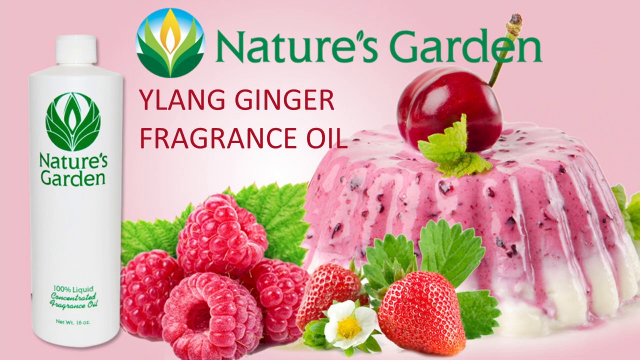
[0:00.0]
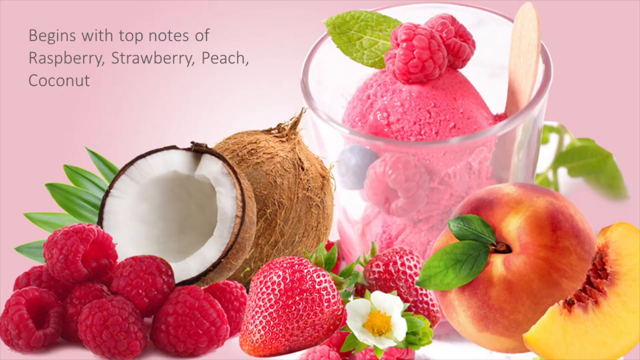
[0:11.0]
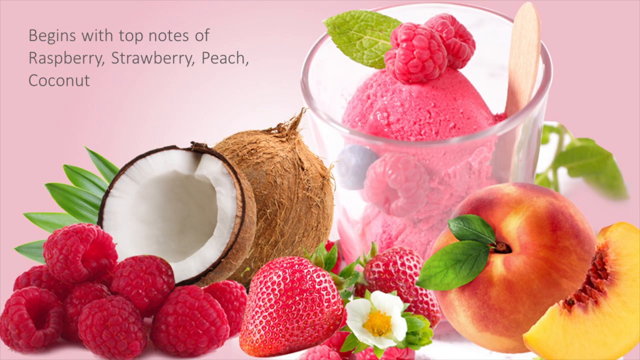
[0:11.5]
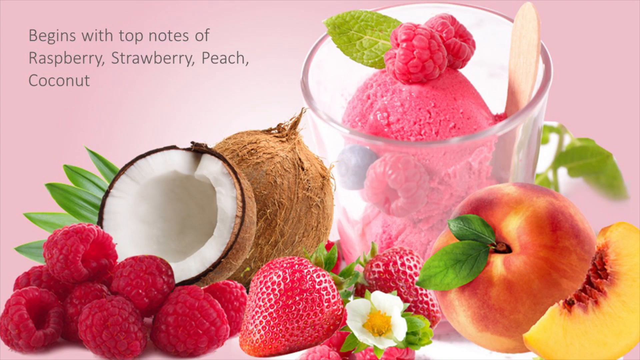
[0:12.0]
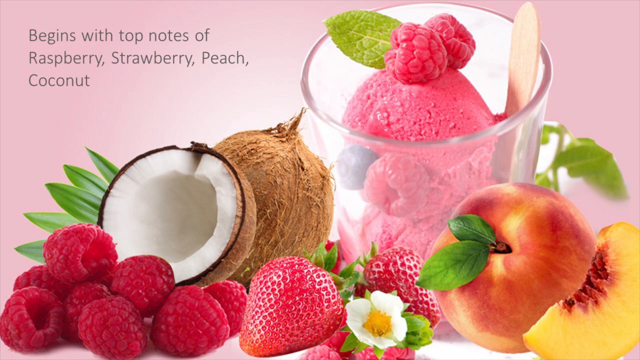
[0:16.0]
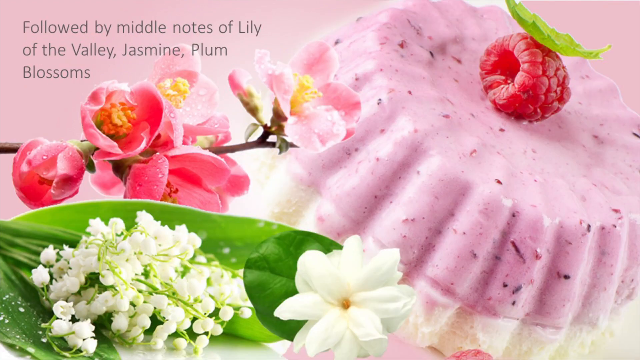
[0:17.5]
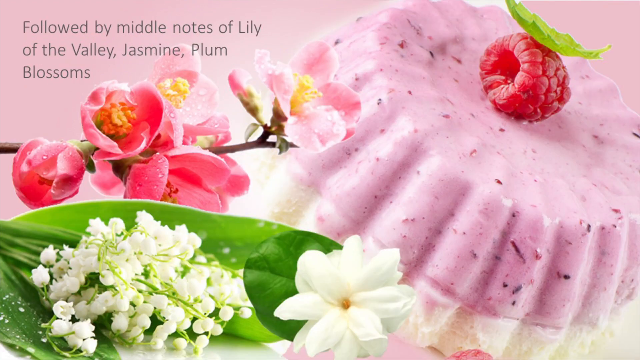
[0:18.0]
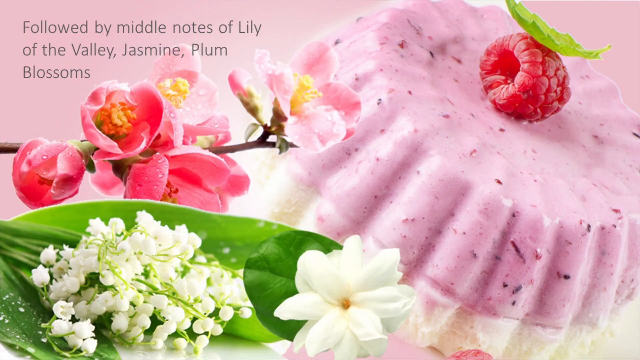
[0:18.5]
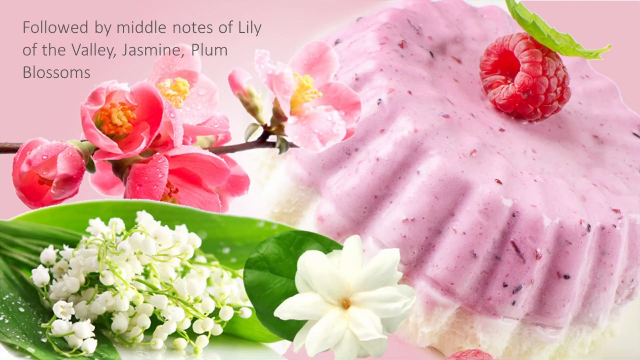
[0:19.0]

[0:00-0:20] A fragrance oil, Ylang, is displayed. Above it is the text "nature's garden". There is a logo of what looks like an orange flame with white in the middle and three green leaves on the left or right side. To the left is a Nature's Garden bottle, a long white bottle with "nature's garden" in green and the same symbol above it, all in green. To the right, in darker pink, is the text "Ylang ginger" and "fragrance oil". There are pictures of fruit, including raspberries at the bottom and a couple of strawberries. On the side is a gelatin mold with vertical ridges all around it; it starts off big and slants in, and it is round and flat at the top with a cherry. The video then moves to top notes of raspberries, strawberry, peach and coconut. Different fruit is shown in a bowl, with what looks like a popsicle stick on the right; it almost looks like a sorbet, with a couple of pieces of raspberry on top. Coconut and peaches are pictured on the side as well. Lily of the valley and jasmine flowers are also shown, seemingly sideways.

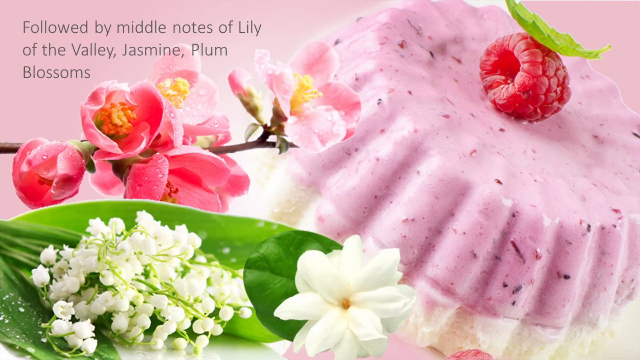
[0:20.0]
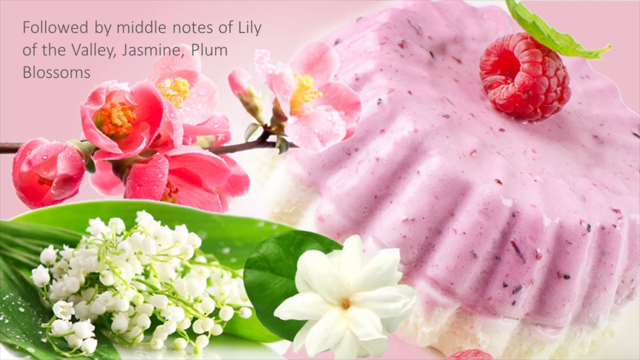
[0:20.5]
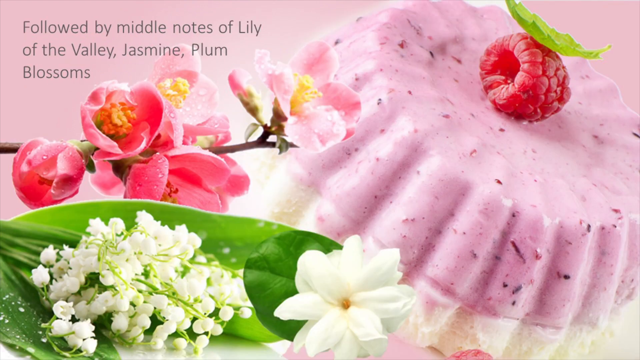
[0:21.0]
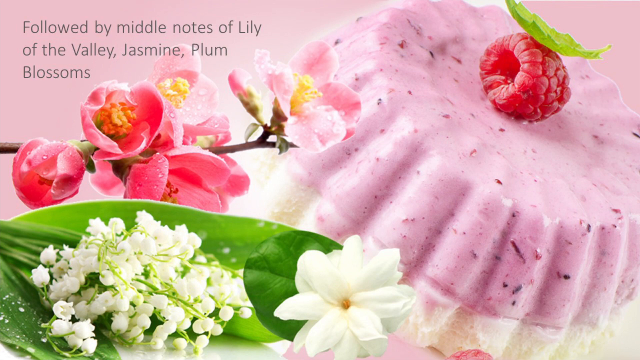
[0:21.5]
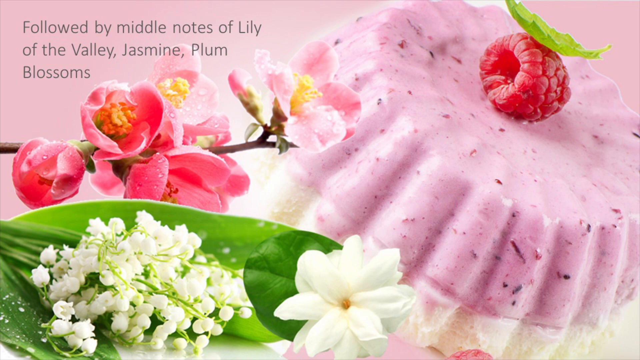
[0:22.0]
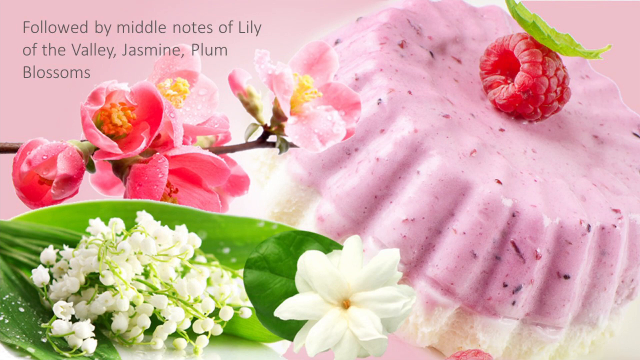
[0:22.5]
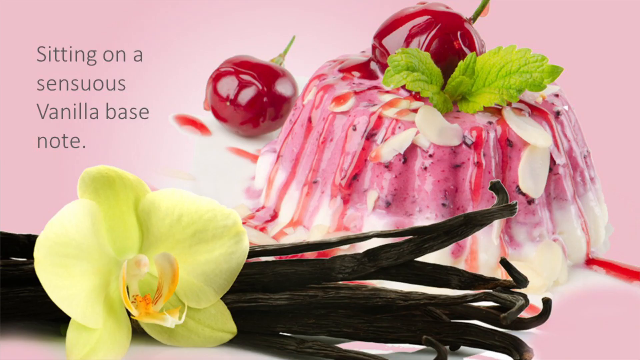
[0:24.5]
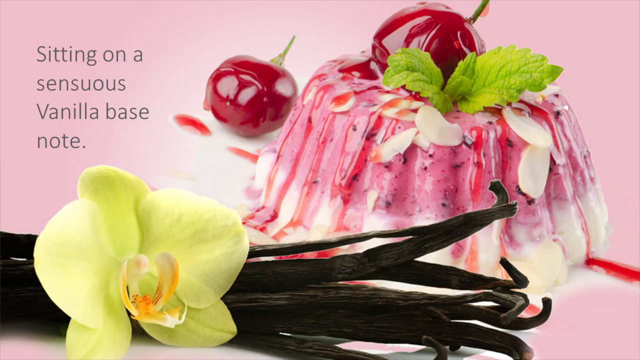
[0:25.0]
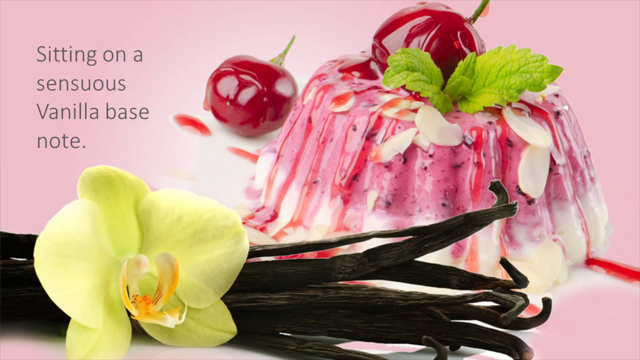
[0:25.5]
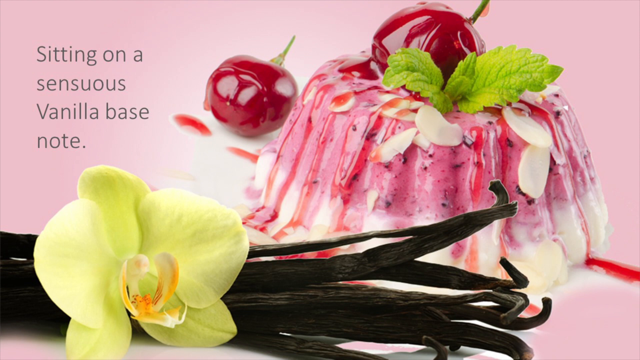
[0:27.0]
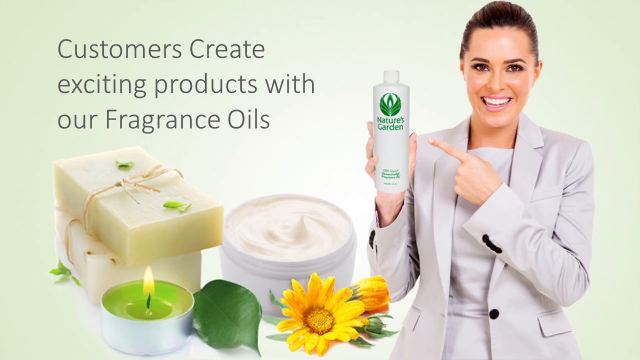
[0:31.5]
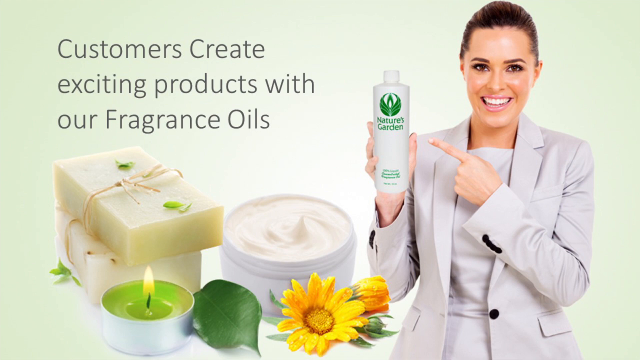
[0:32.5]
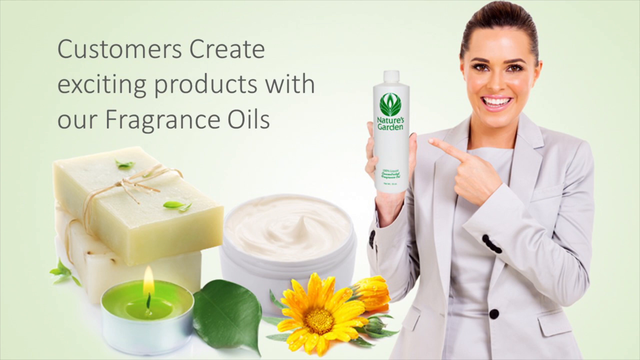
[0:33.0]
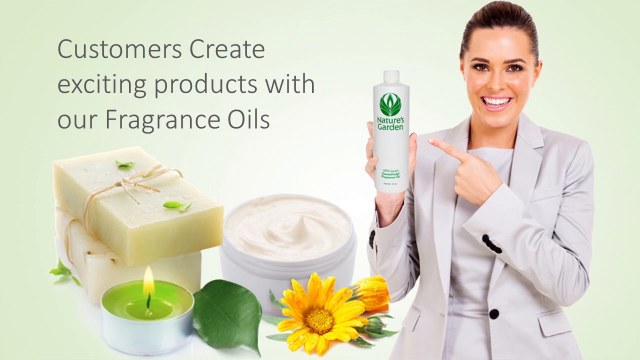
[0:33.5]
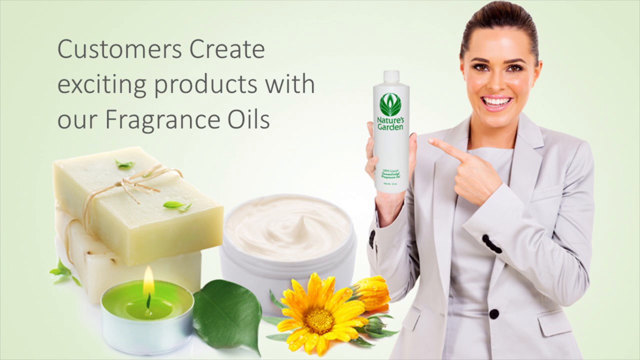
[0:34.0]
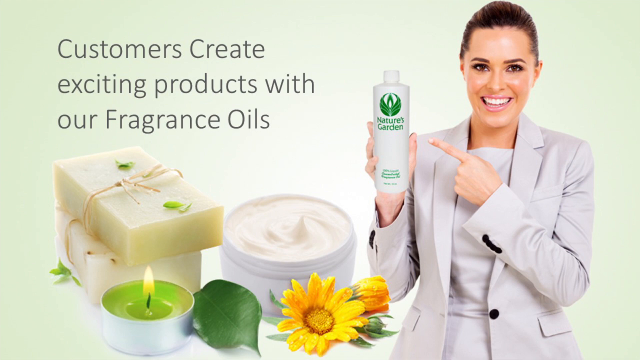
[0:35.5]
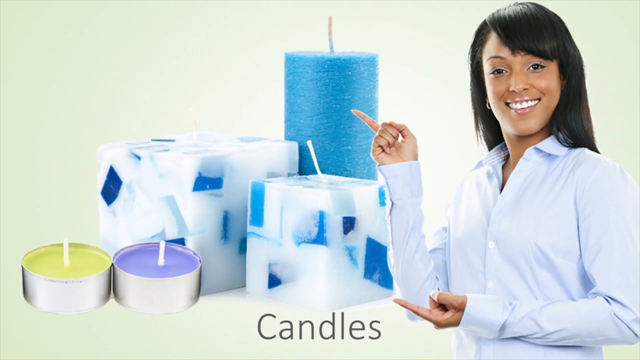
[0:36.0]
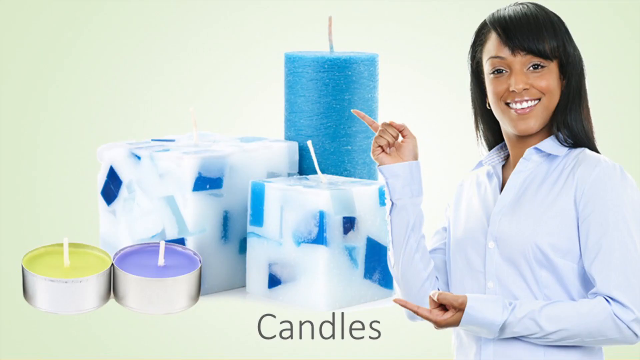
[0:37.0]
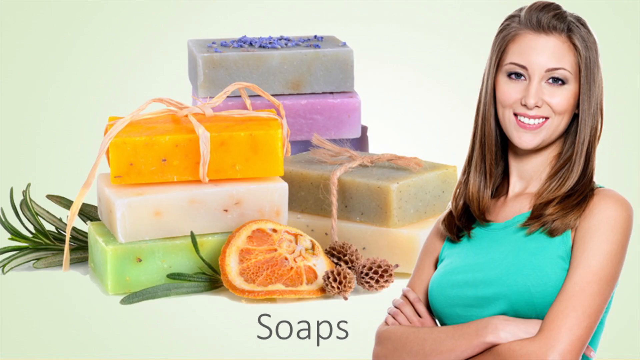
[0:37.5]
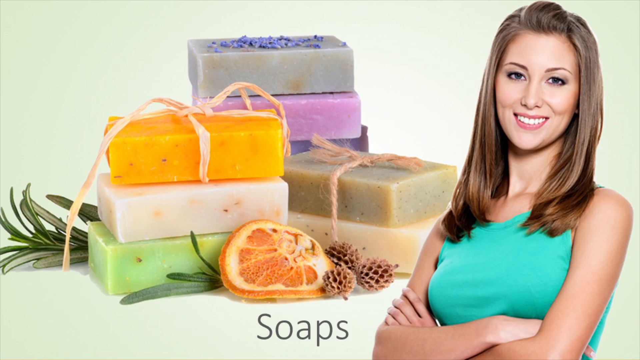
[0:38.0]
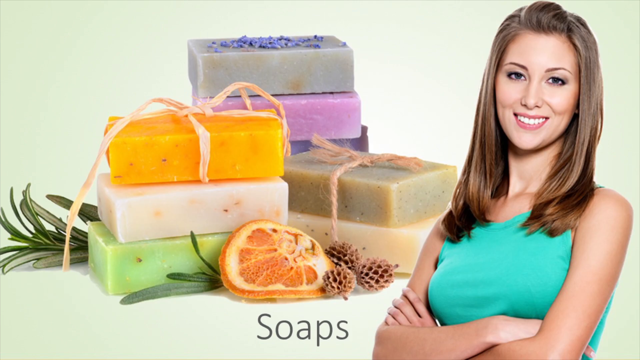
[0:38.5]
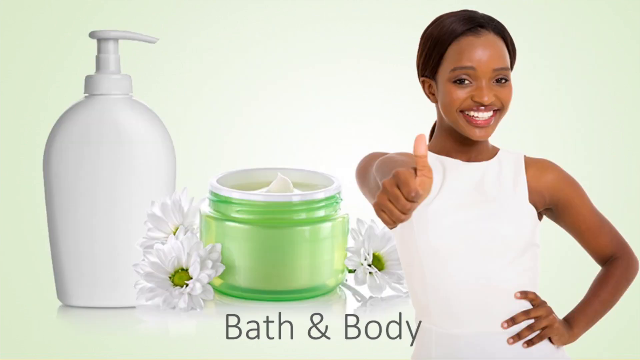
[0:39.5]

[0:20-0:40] A more zoomed-in shot of the gelatin shows a bunch of speckles in it, probably speckles of the fruit within it. A single raspberry is on top, on its side; on its left side the hole is visible, along with all the segmented parts that make up the raspberry. A single leaf on top of it curves up and to the left. Pink flowers appear sideways on a branch, and underneath is a very large leaf, zoomed in. There is a cluster of little white buds, and to the right of that a larger pink flower with about five or six petals. The next slide shows the gelatin with what looks like cherries with liquid over them, and one cherry on top. The cherries seem to be oozing syrup that slides down the sides of the gelatin. To the left, on four lines, is the text "sitting on a sensuous vanilla based note". There are vanilla sticks going lengthwise and curving up, with a yellow flower in front of them on the left side. A lady in a white suit is pointing to it, with a candle, a couple of blocks of soap on top, and some kind of cream in a tub. Another lady is pointing to different candles. Another, in a green dress, stands with her arms folded beside soap, and there are stacks of different soaps tied together with string. Another lady, a Black woman in a white strapless shirt, gives a thumbs up with some pump soap. The text "bath and body" is at the bottom.